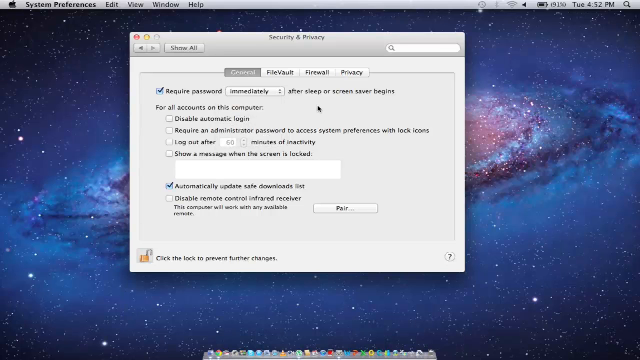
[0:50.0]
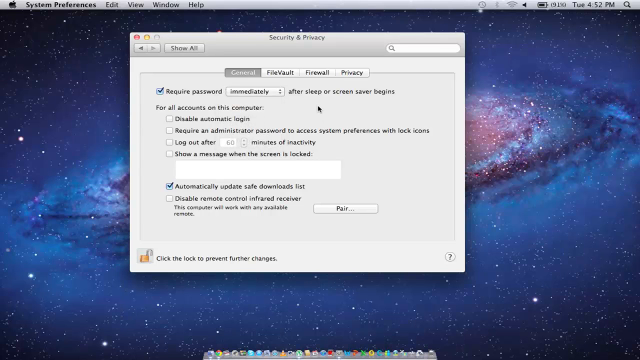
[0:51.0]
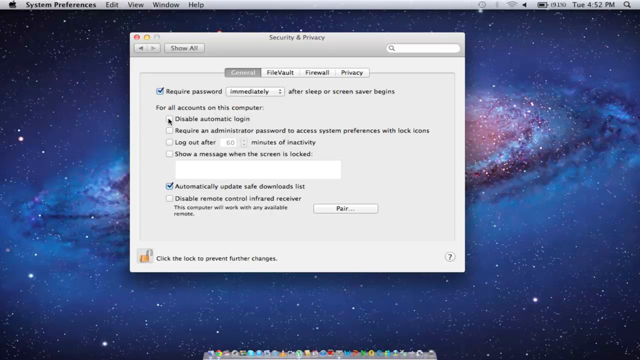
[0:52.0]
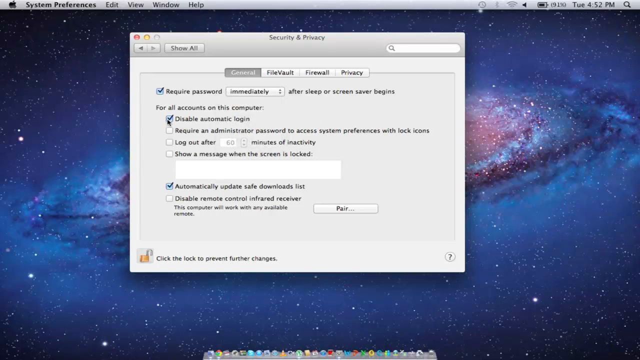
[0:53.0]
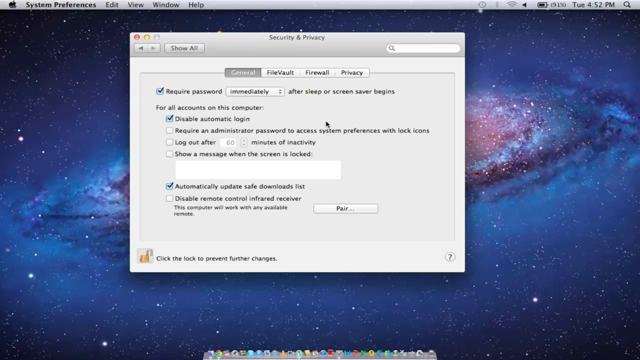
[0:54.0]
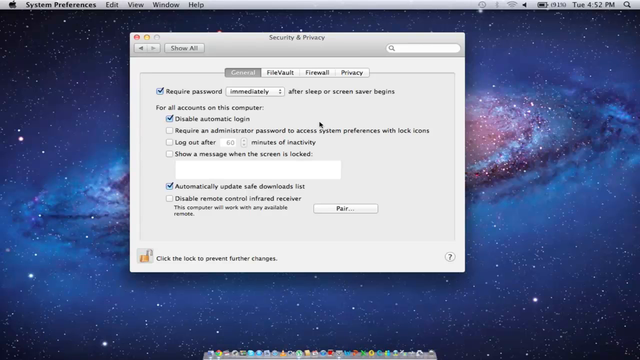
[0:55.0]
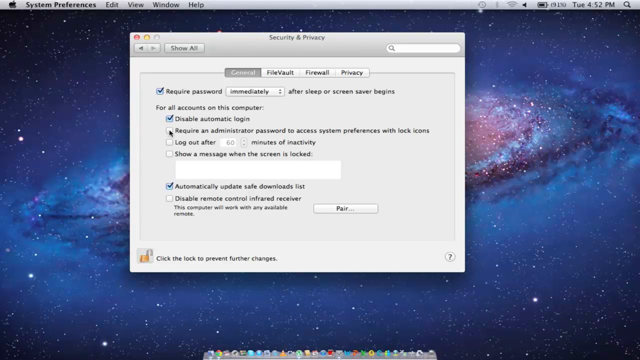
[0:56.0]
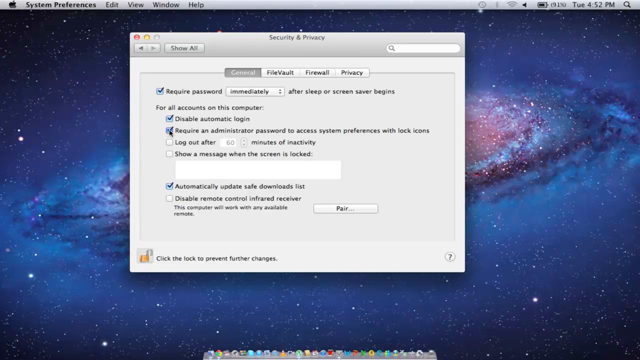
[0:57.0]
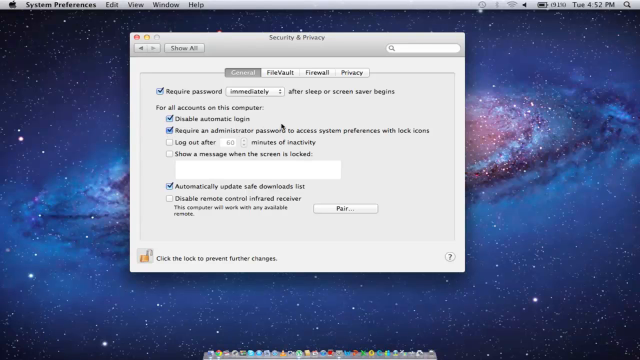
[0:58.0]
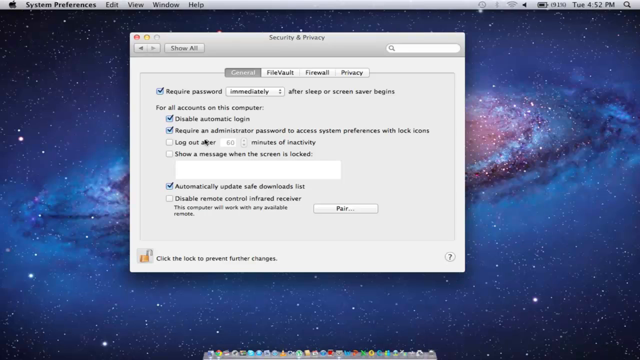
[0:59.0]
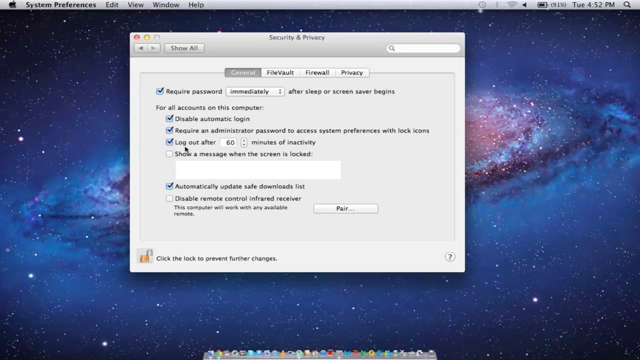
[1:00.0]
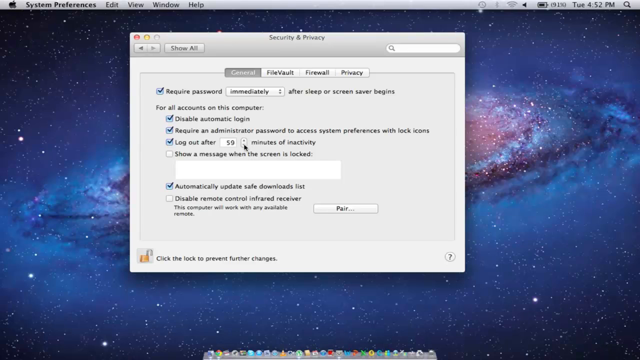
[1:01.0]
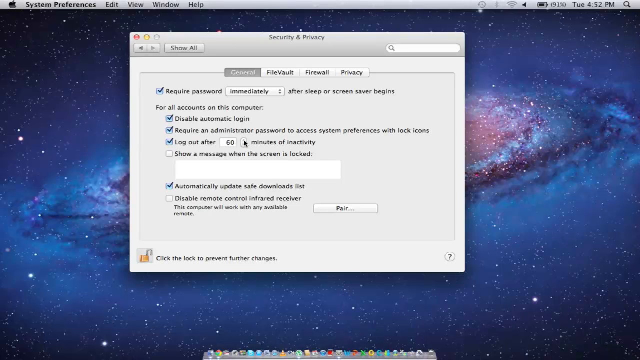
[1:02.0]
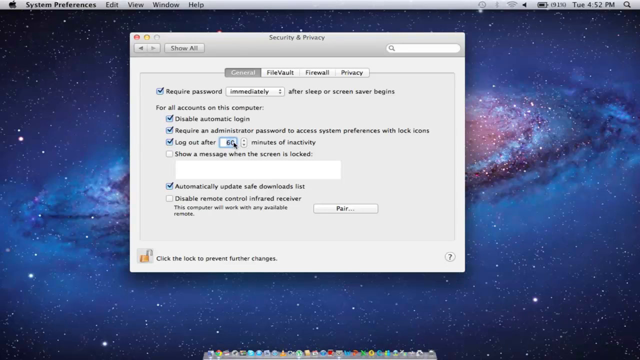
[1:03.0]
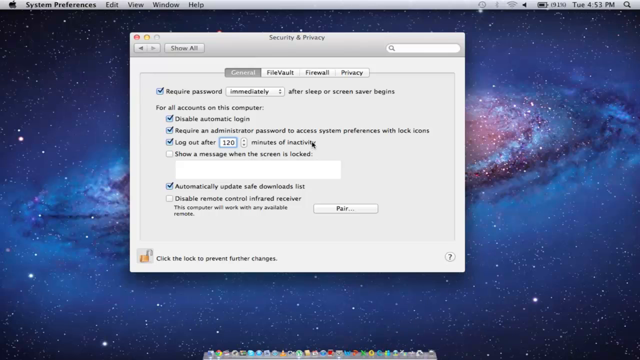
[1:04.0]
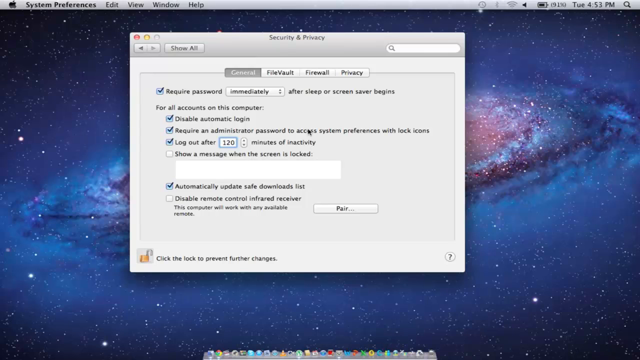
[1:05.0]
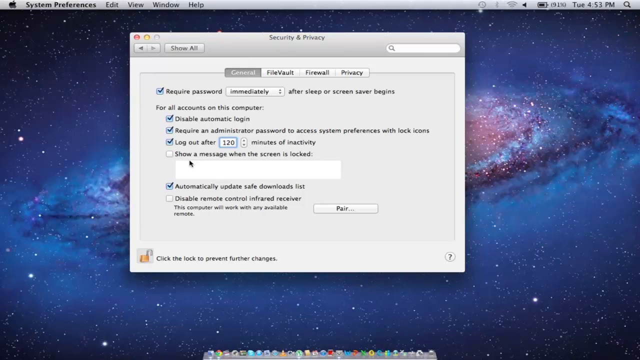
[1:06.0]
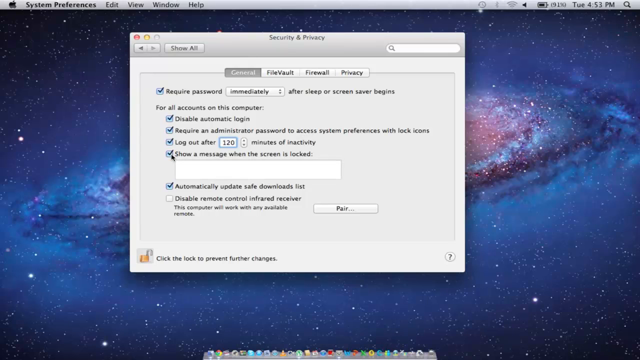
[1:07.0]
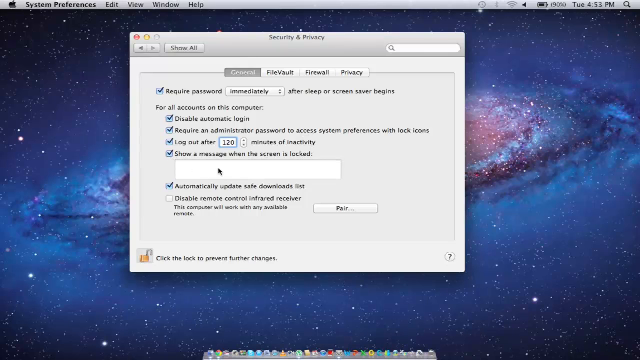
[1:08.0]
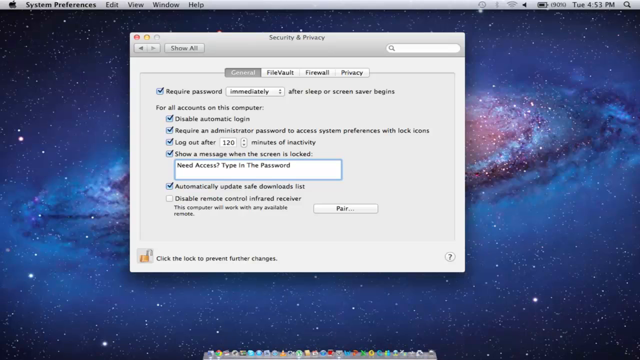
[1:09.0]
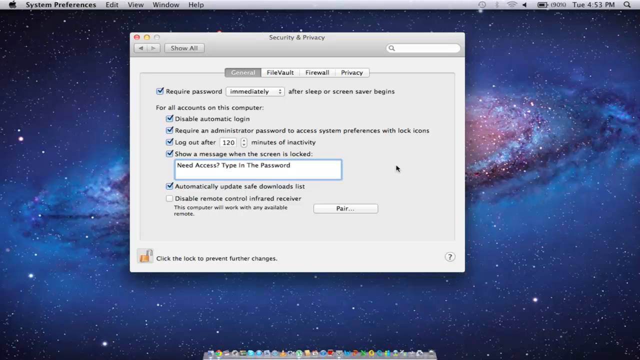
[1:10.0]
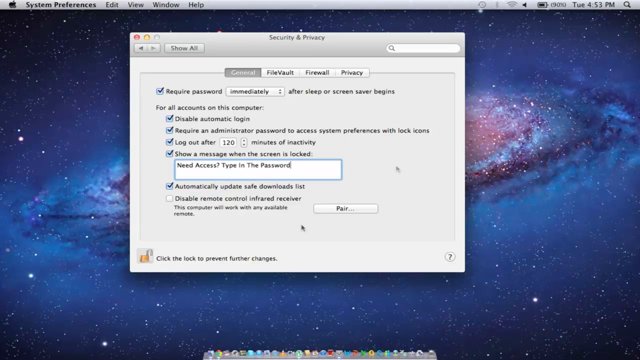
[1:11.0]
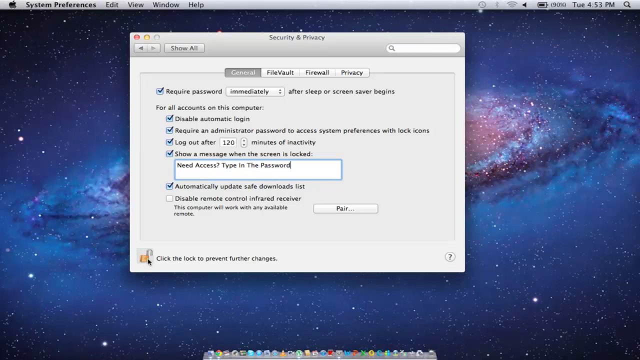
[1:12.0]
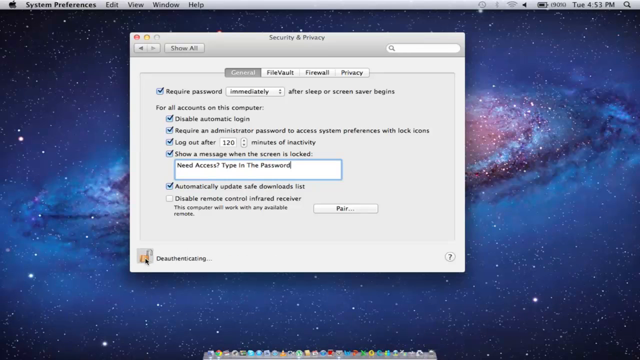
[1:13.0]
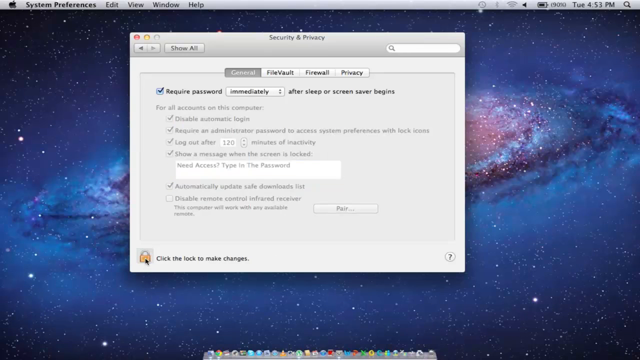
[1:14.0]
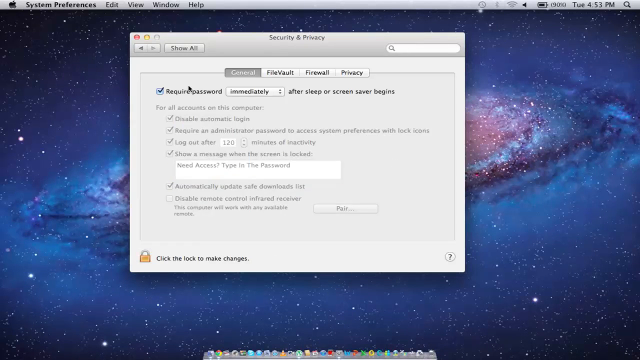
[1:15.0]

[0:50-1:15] A box for automatic login is ticked, then the box for "require an administrator password" to access system preferences is ticked. Next there is a log out after option with a number of minutes: a box shows 60, with up and down arrows for going below or above 60. Below that is "show a message when the screen is locked", with a blank box for entering the text of the message shown when the screen is locked. There is more clicking, and more boxes are ticked.